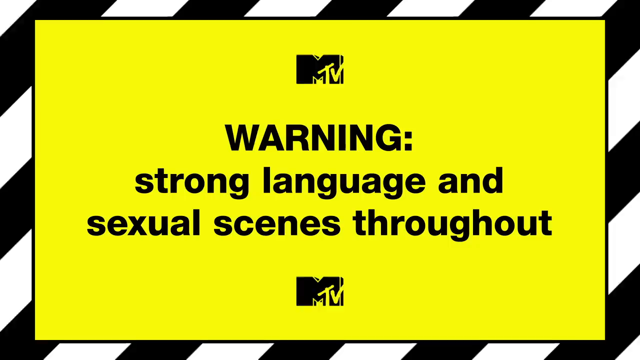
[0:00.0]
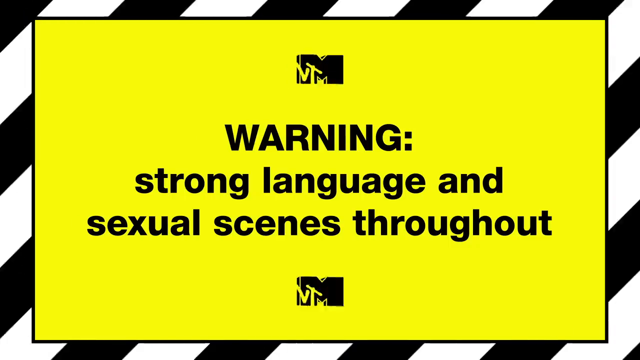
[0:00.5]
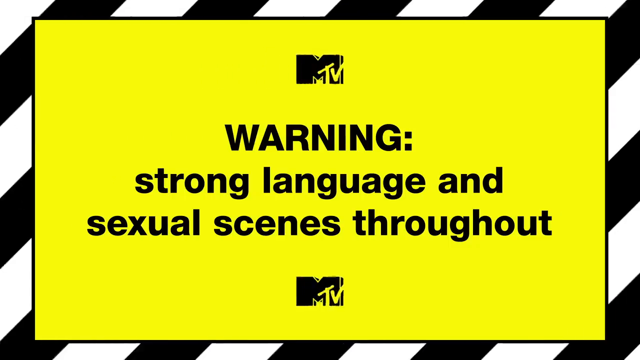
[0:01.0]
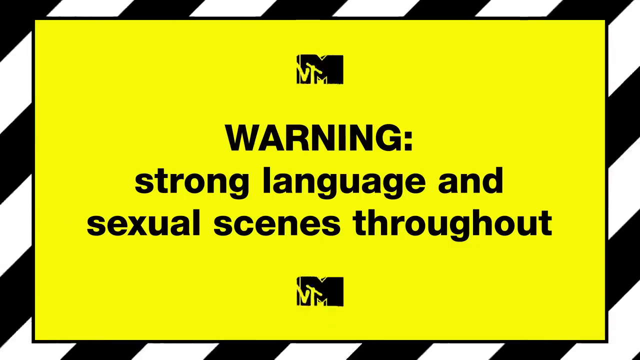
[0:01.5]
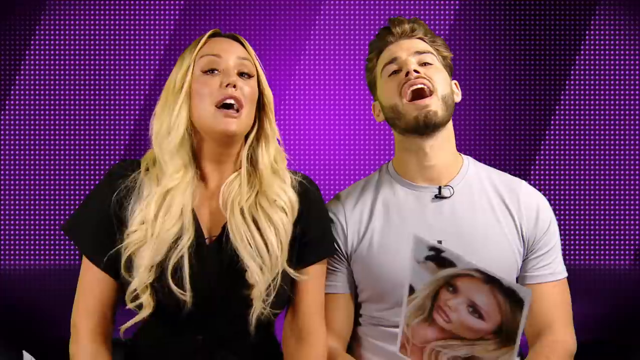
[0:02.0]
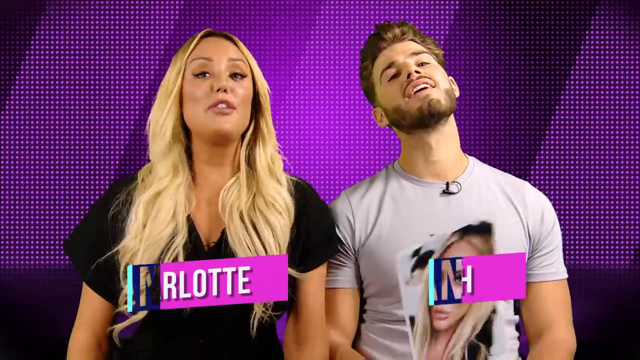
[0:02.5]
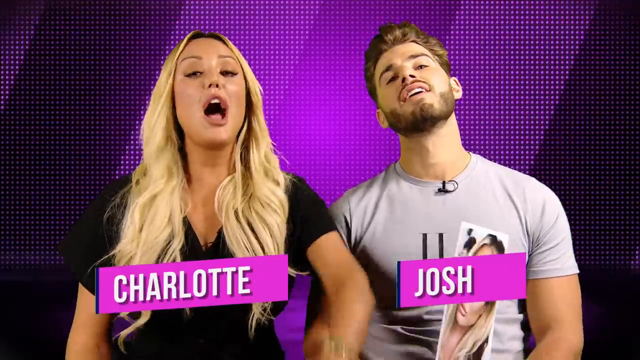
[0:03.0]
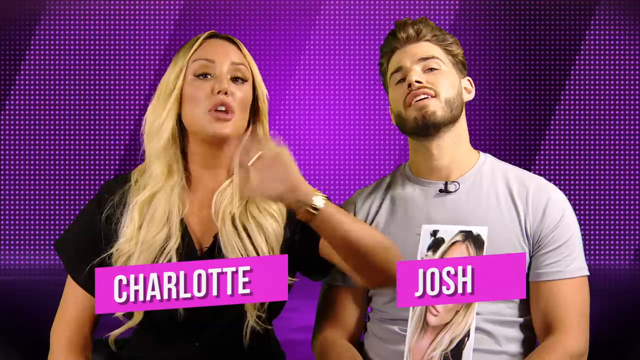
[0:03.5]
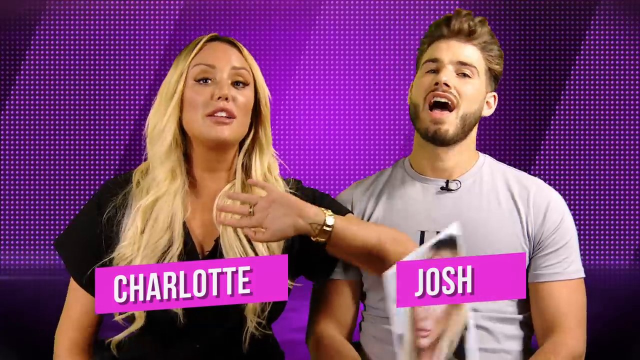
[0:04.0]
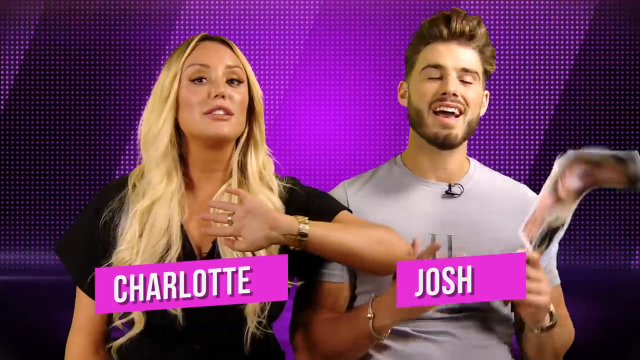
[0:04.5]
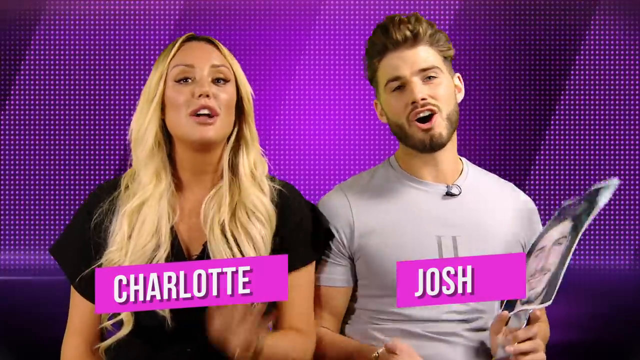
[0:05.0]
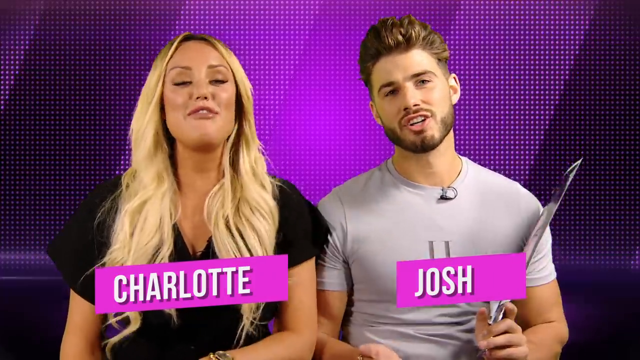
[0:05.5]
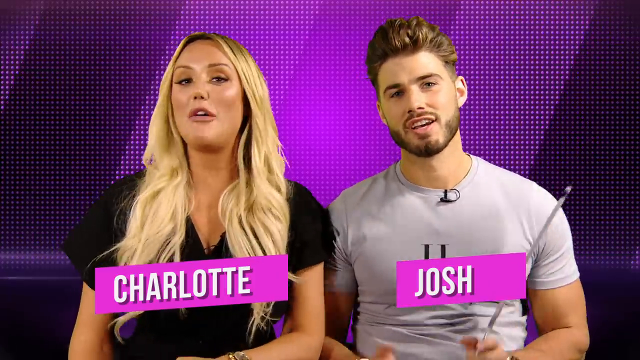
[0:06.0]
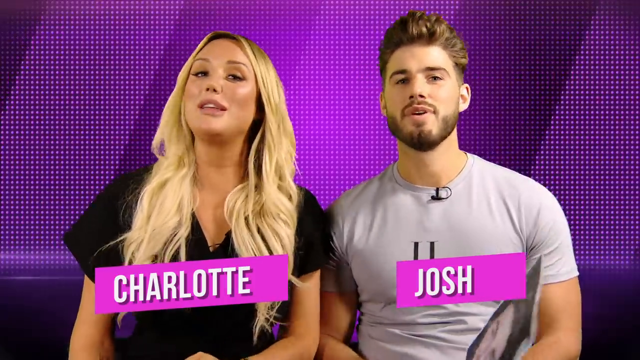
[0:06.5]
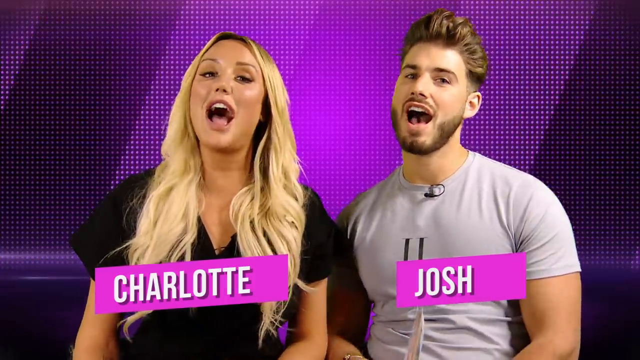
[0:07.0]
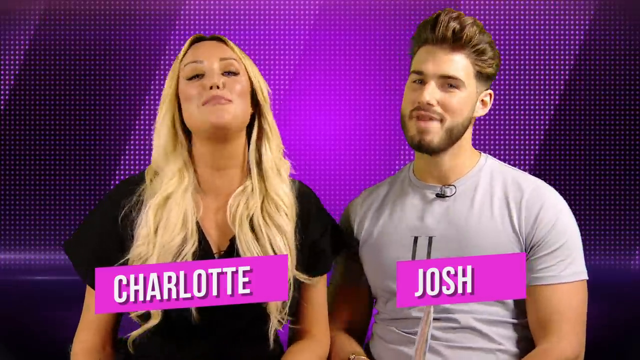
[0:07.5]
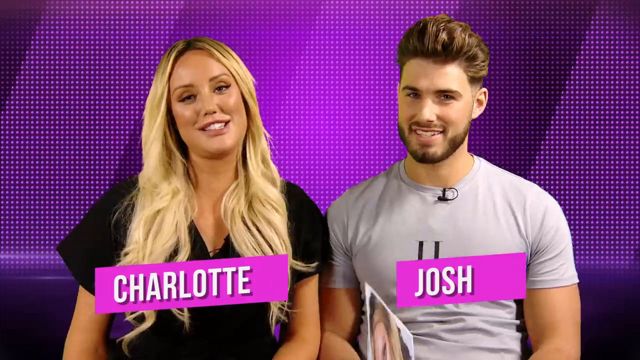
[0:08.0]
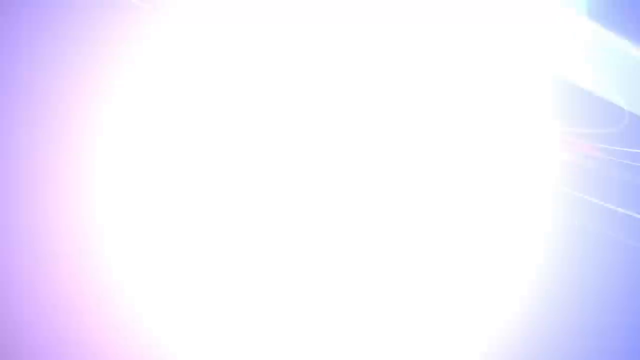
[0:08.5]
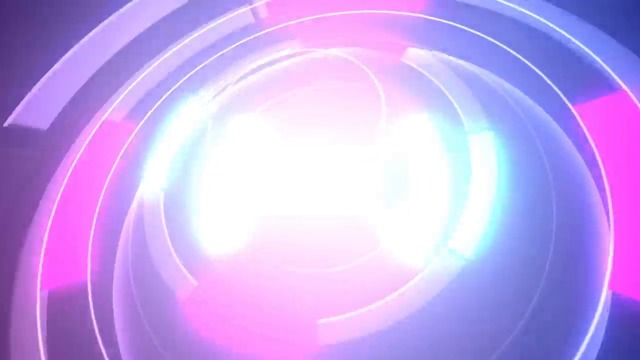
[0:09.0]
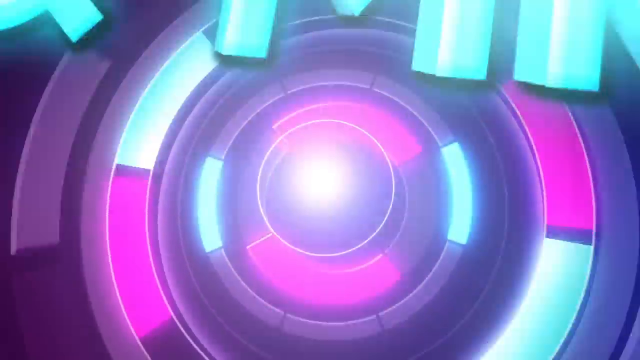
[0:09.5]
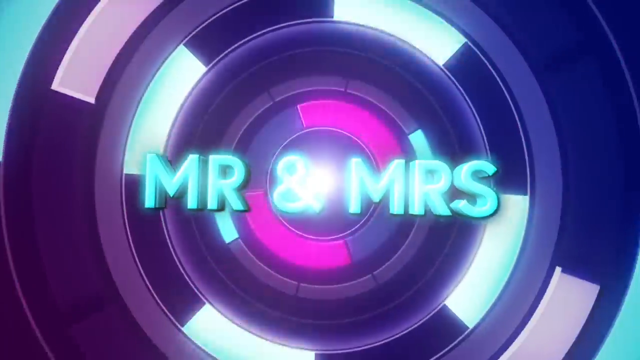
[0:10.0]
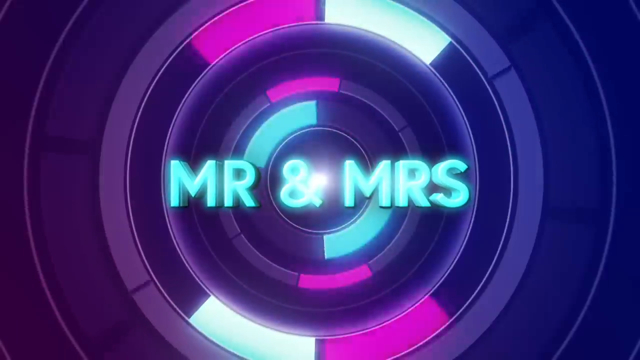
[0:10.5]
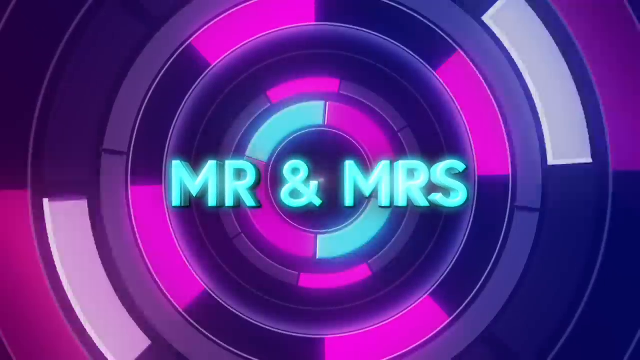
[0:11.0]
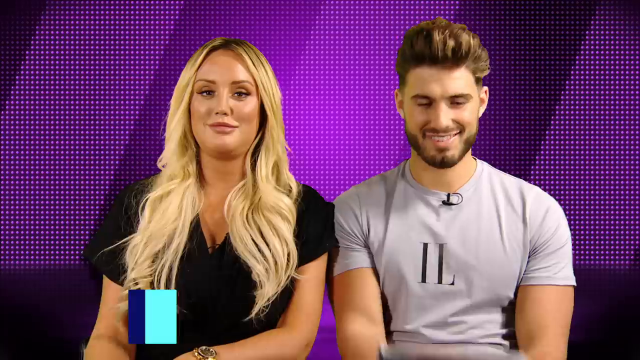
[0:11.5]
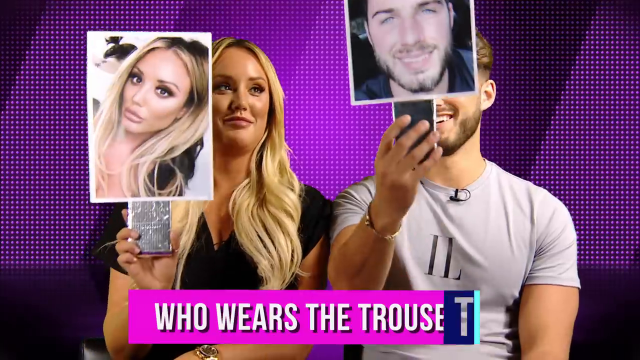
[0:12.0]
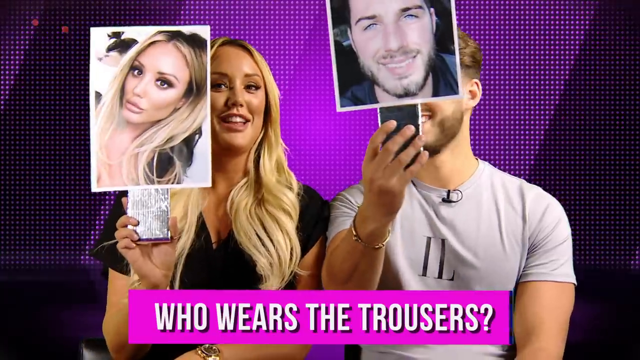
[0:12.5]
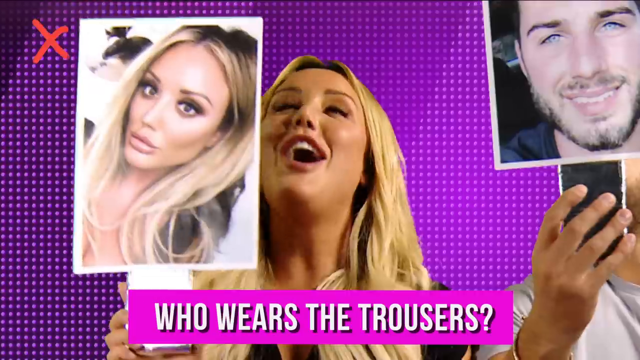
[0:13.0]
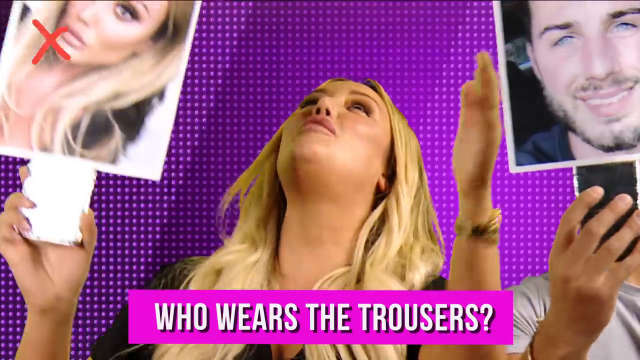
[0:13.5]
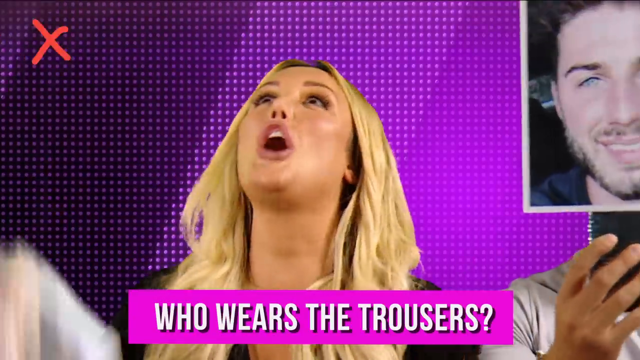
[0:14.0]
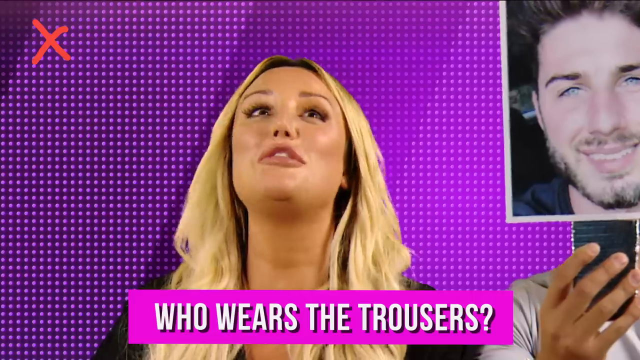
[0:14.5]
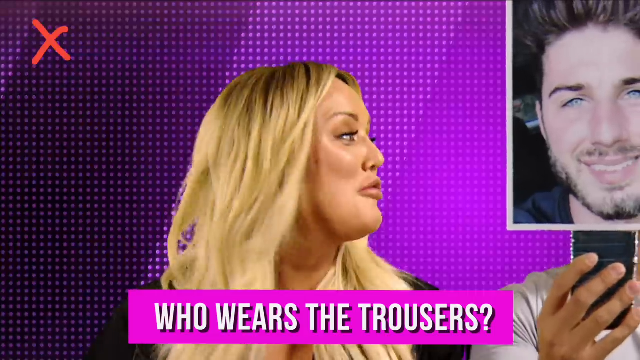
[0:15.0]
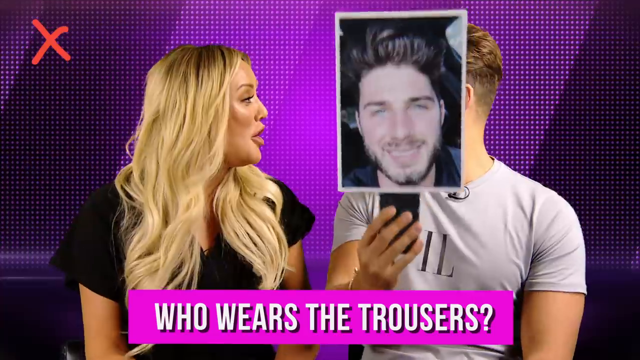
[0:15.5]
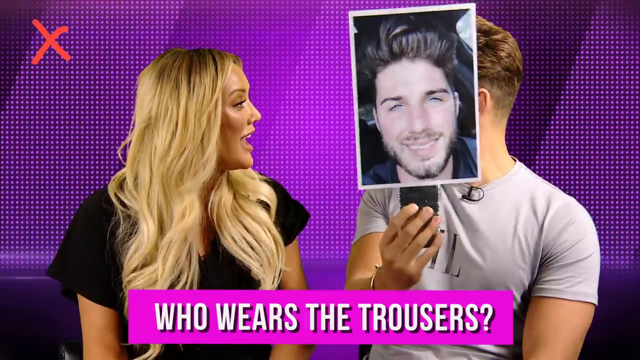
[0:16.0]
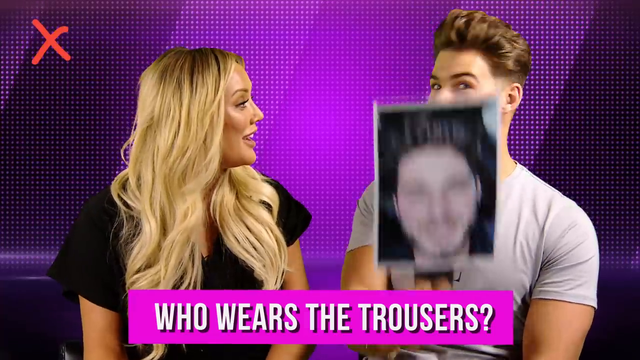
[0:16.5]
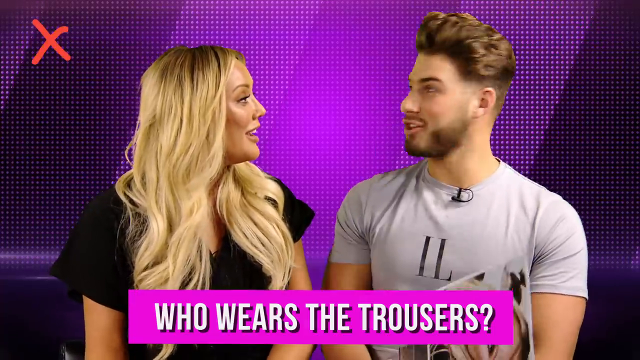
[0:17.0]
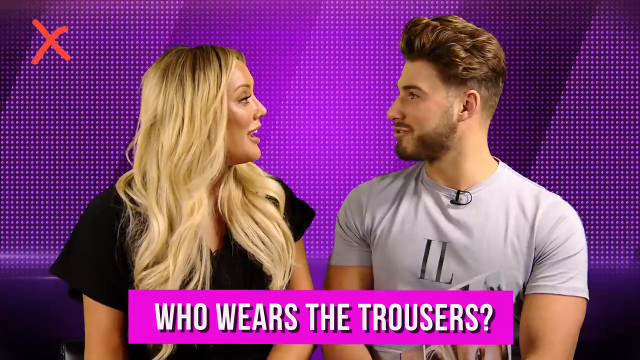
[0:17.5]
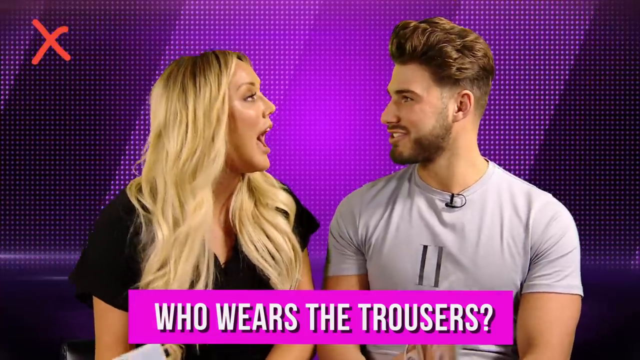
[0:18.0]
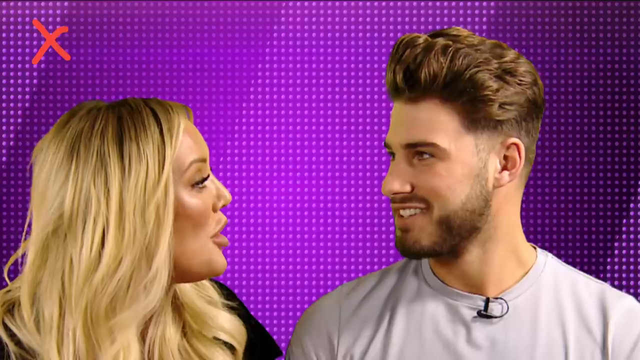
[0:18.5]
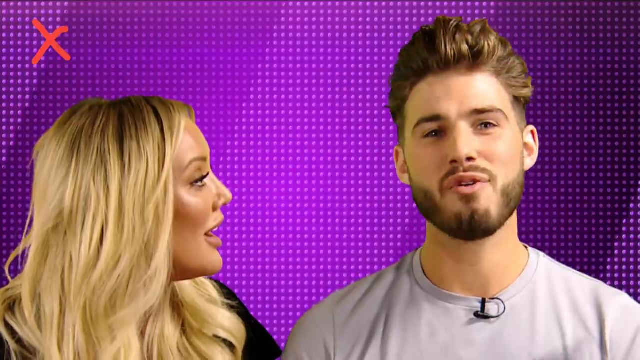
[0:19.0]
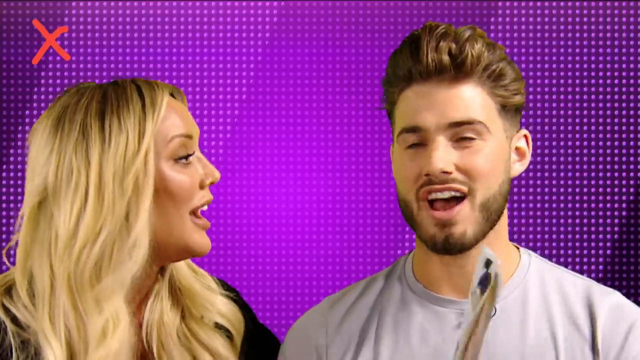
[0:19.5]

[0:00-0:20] The video, titled Mr. and Mrs. Charlie Crosby and Josh Richie Just Tattoo of Us Four, has an MTV logo and an MTV UK logo. It opens with a warning: "WARNING" in all caps, followed by "strong sexual language and sexual scenes throughout." Charlotte and Josh are then shown speaking, apparently introducing themselves. Next comes the question "who wears the trousers?" and they each vote for themselves. Behind them the background is flashing purple diagonal stripes. After their answers don't match, they appear to argue with each other, something along the lines of her asking "how can it be you?" and him replying "well of course it's me."